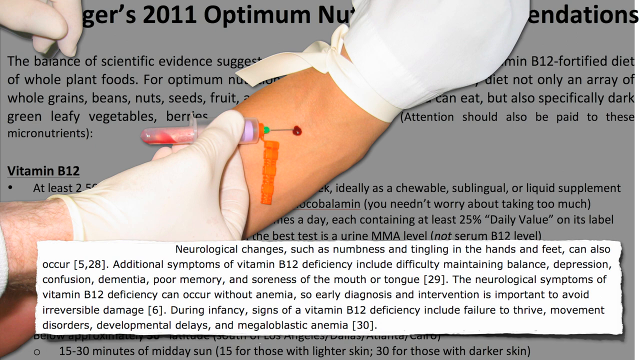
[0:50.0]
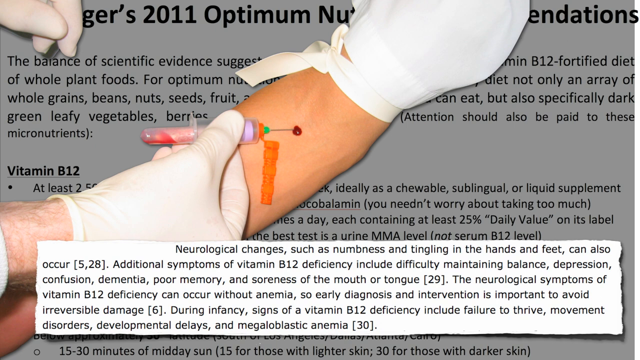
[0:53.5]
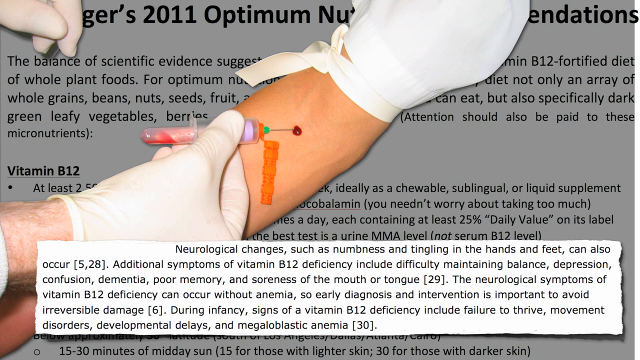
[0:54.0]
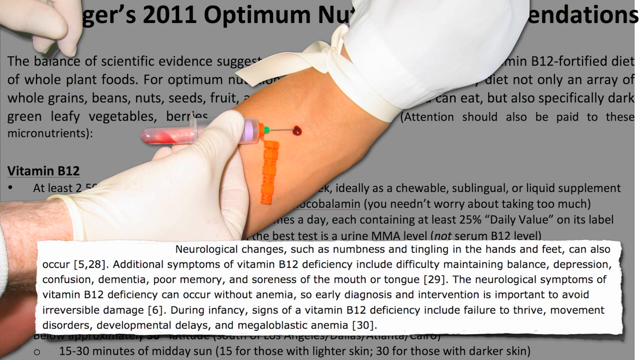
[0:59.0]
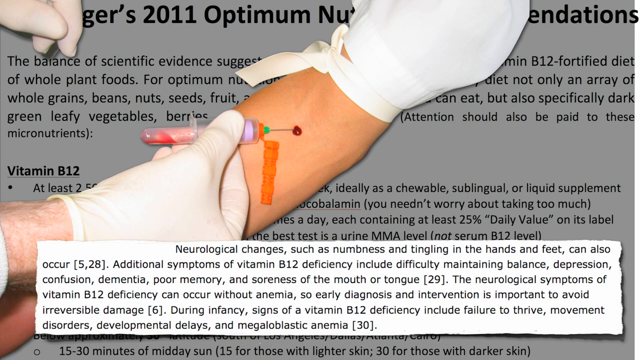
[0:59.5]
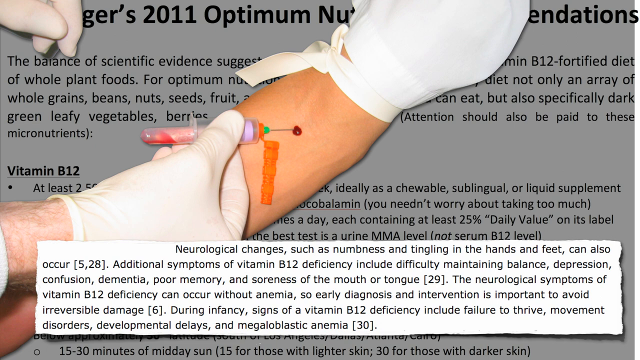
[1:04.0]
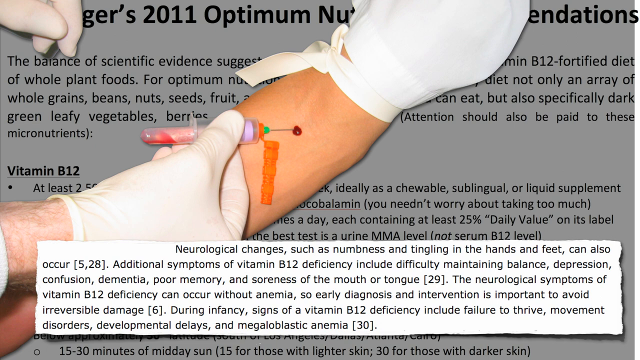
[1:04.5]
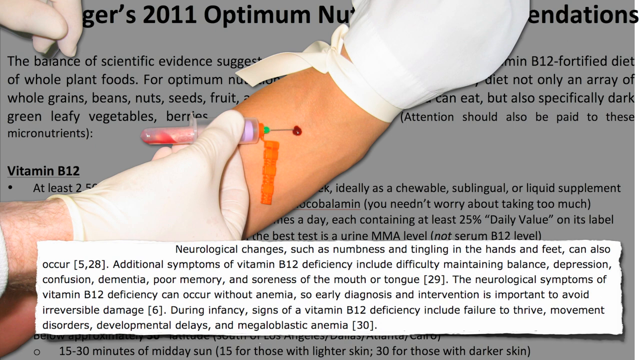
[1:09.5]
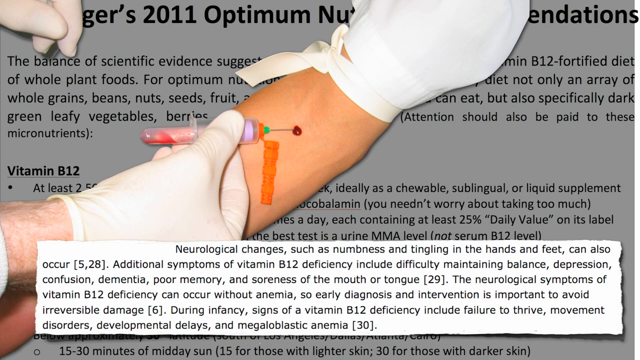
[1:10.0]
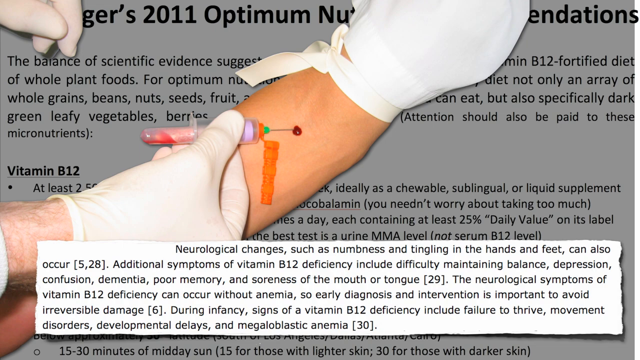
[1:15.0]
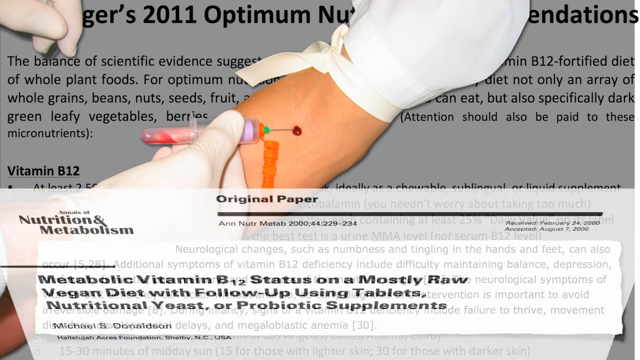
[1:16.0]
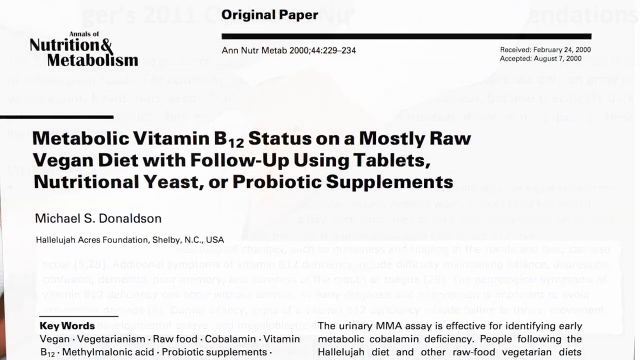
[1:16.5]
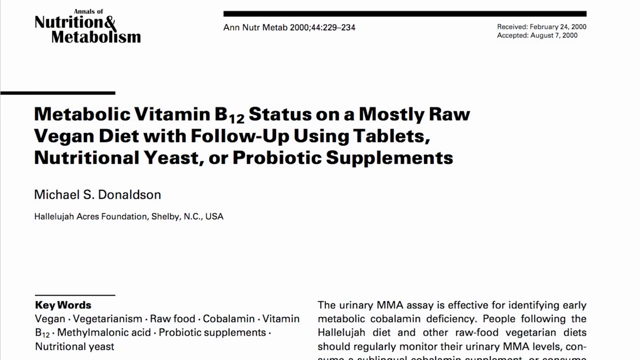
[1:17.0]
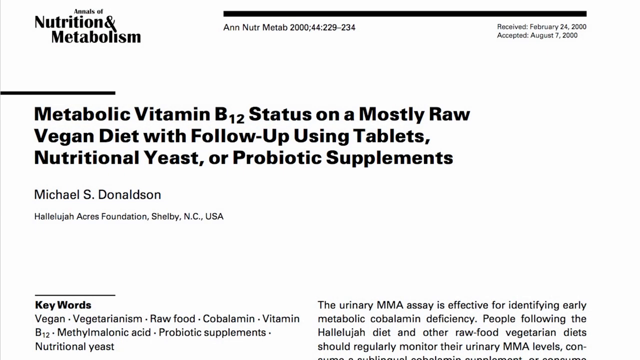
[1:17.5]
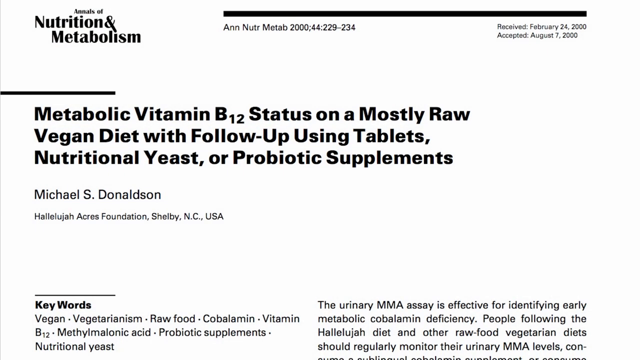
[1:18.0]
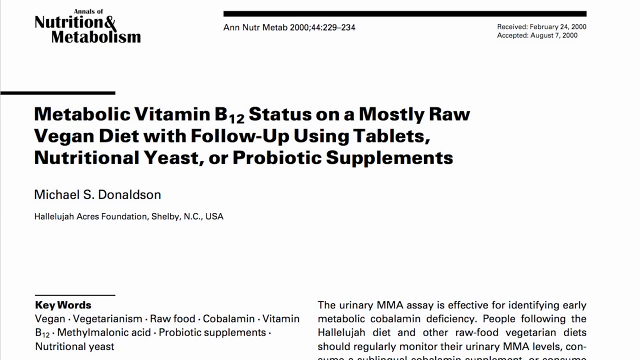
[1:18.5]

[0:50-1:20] The image of the arm having blood taken by the needle remains. There is a small pool of blood on the arm where the needle connects, and a gloved hand holds the base of the syringe with a thumb and index finger while the needle pokes through the skin. The background is a grayed-out image of some of the earlier text, and there is a text box at the bottom of the screen. This stays for several more seconds until a new slide flips onto the screen: a white background with a lot of black text and a black line border at the top. The title of the page is "Metabolic Vitamin B12 Status on a Mostly Raw Vegan Diet with Follow-Up Using Tablets, Nutritional Yeast or Probiotic Supplements" by Michael S. Donaldson. Keywords at the bottom of the page say "vegan, vegetarianism, raw food, cobalamin, vitamin B12, methylmalonic acid, probiotic supplements, nutritional yeast."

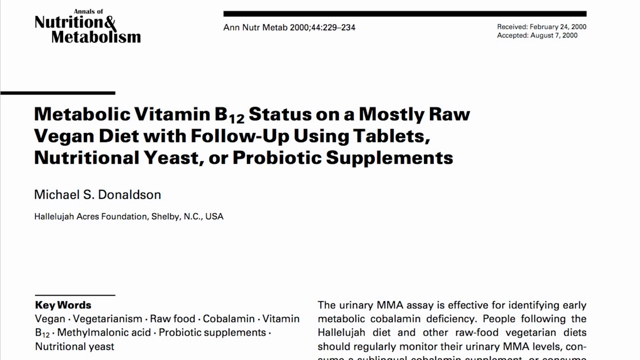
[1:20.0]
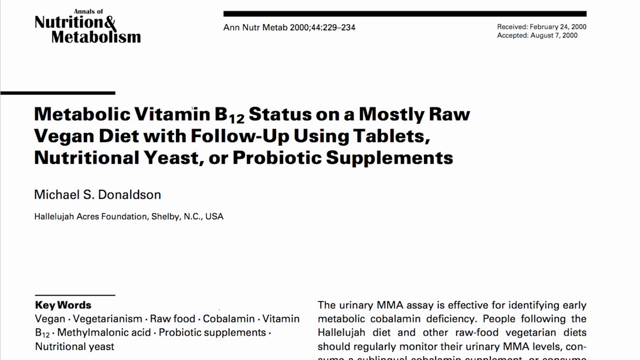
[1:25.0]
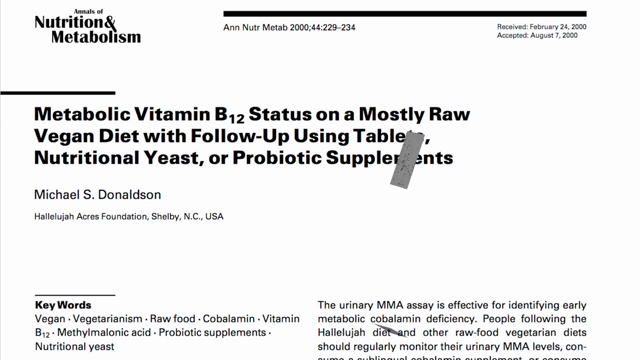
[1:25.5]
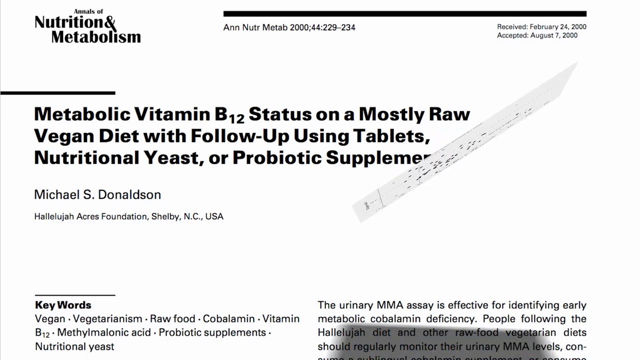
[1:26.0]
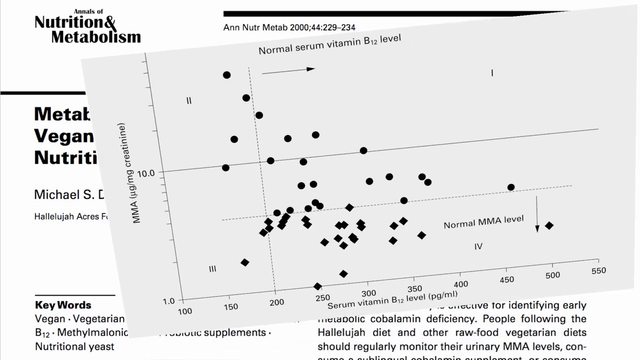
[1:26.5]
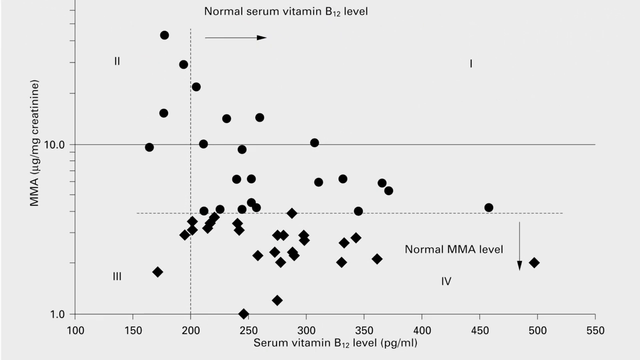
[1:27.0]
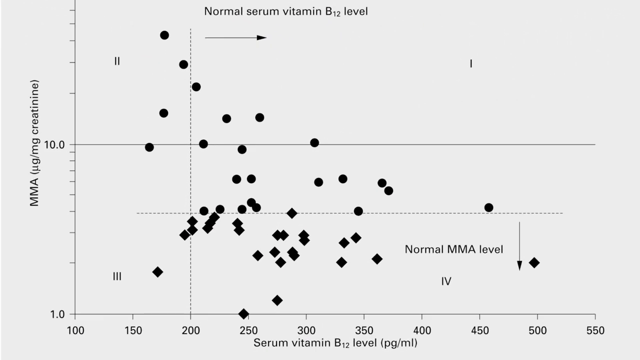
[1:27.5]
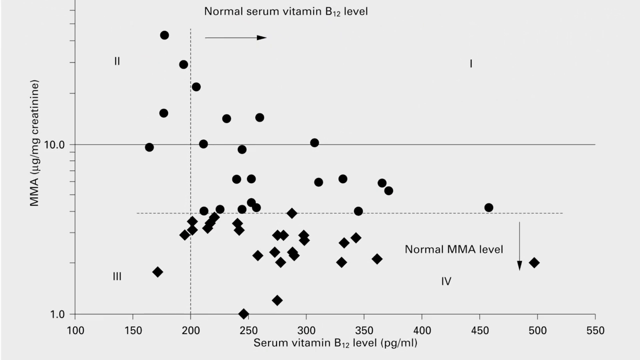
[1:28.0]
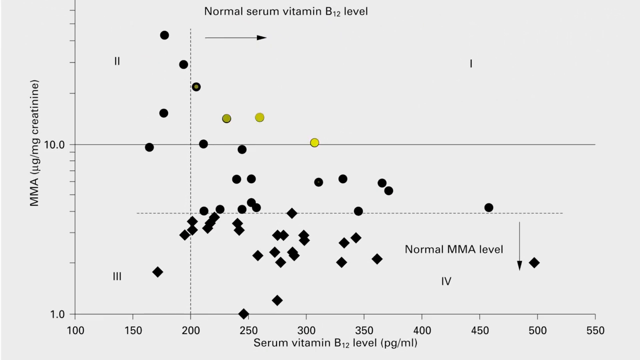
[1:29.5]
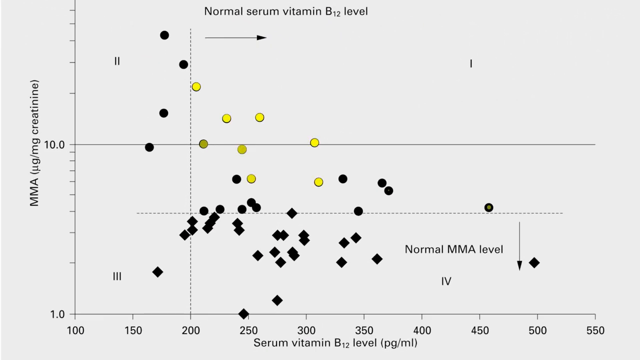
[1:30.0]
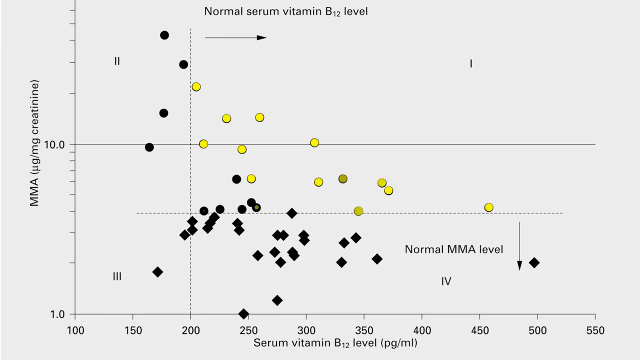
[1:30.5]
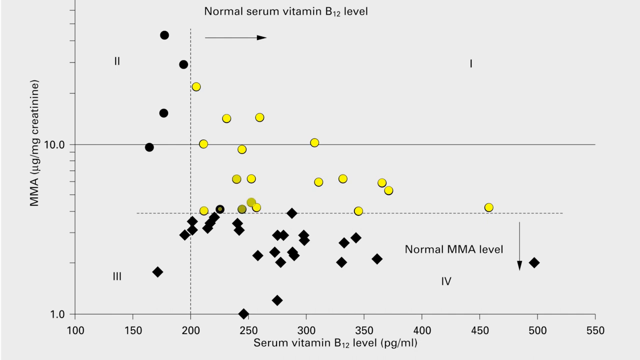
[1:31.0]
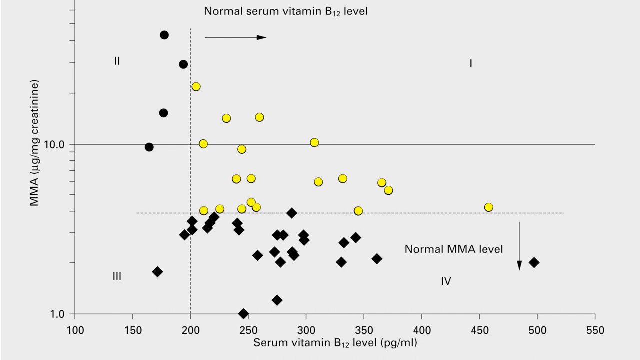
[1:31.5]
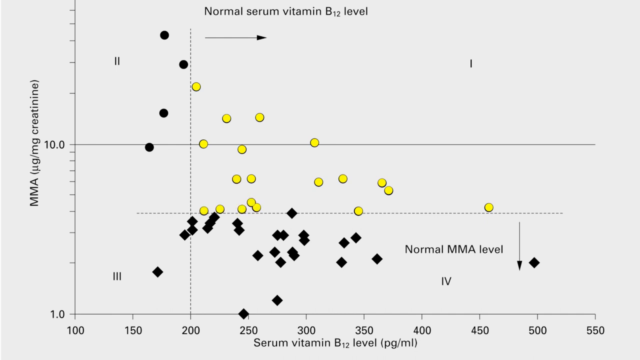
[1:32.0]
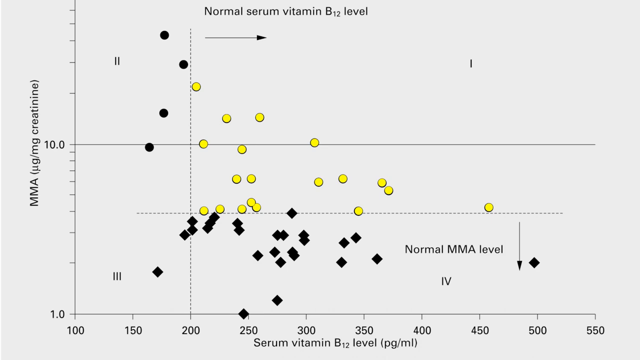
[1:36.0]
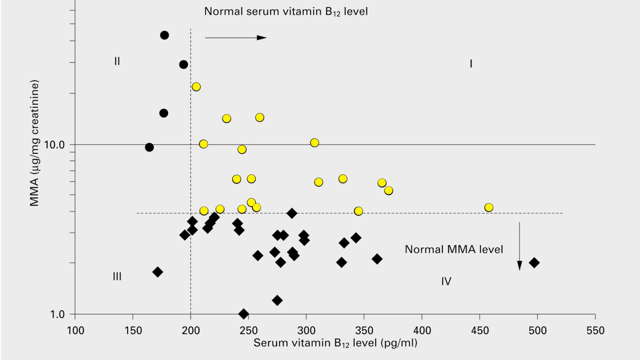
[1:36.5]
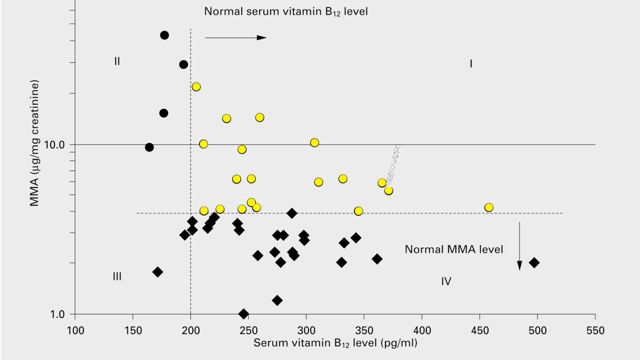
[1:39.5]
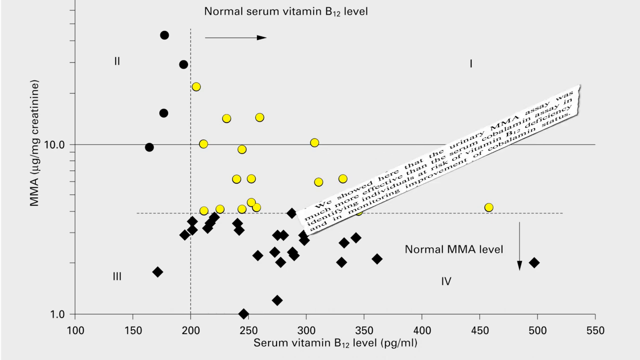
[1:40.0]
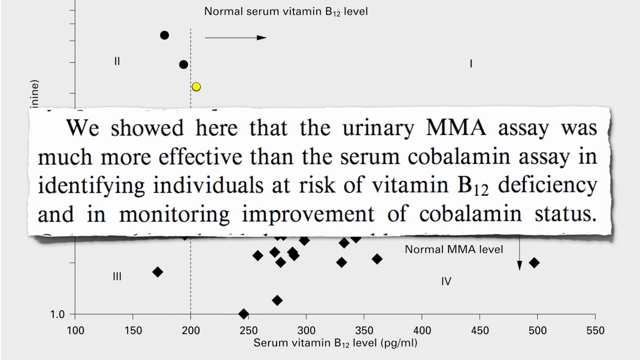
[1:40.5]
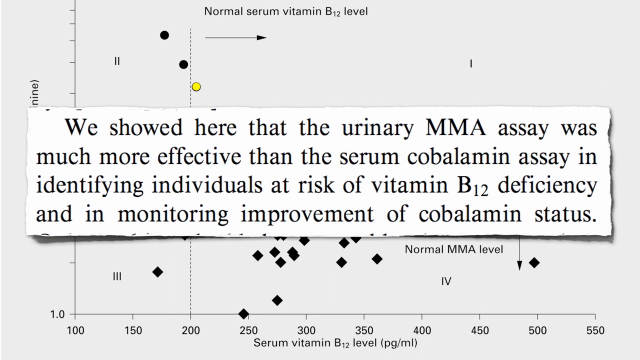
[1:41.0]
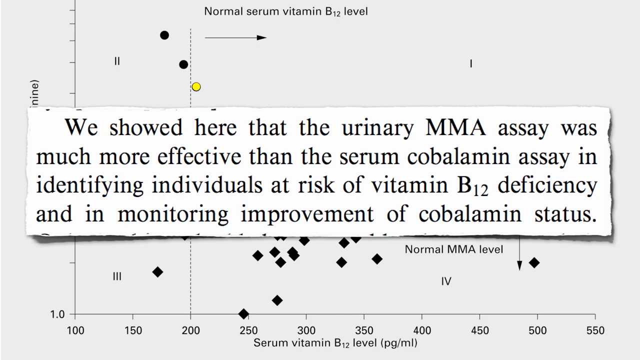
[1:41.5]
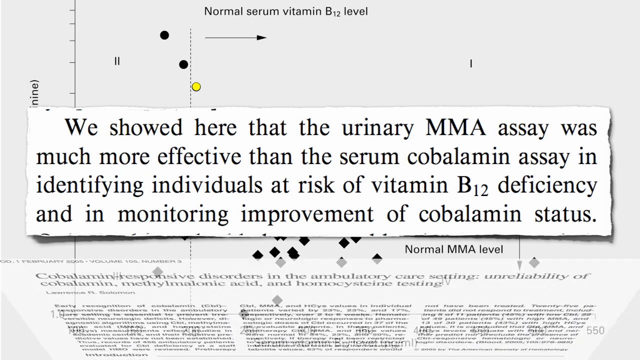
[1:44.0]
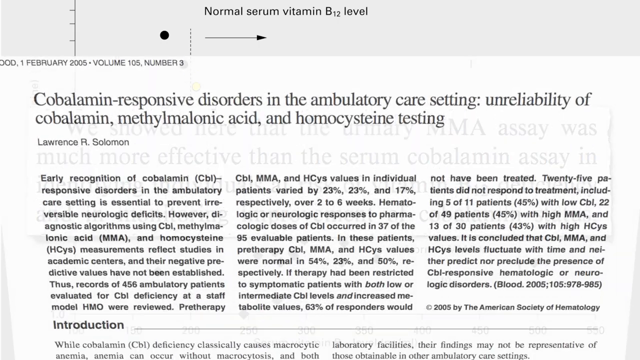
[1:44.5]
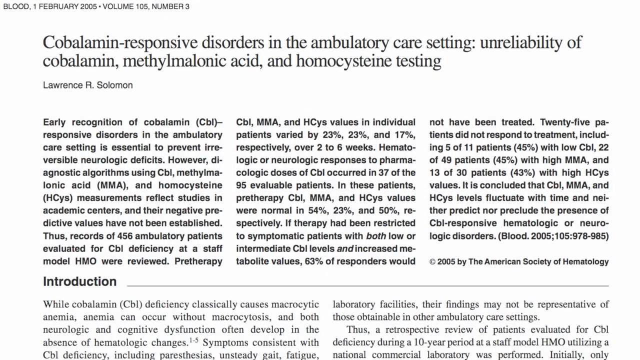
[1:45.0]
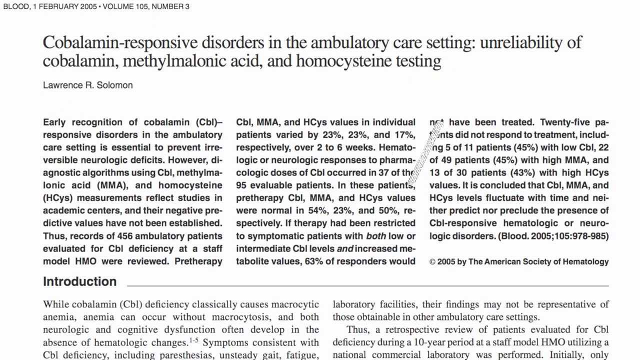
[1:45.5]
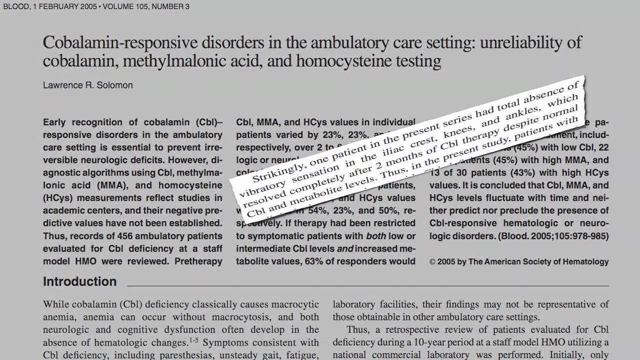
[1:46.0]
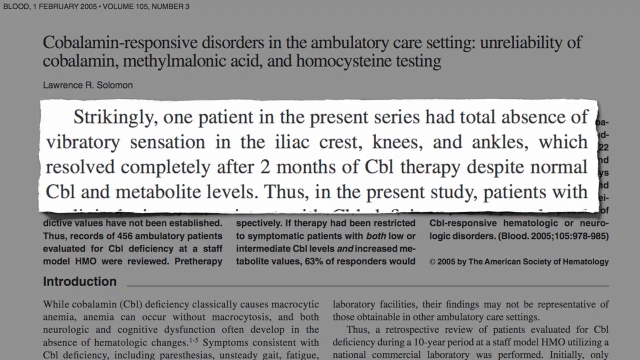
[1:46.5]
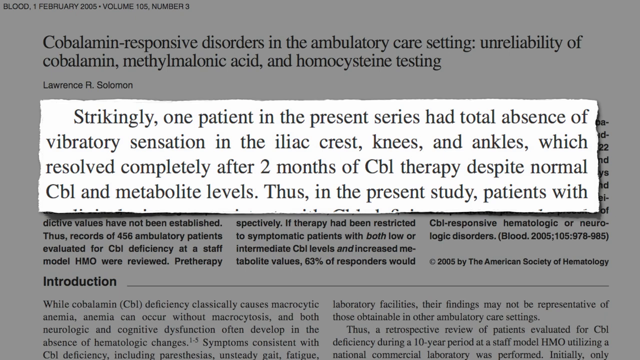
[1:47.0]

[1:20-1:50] The page stays for several more seconds before a graph with a white background flips onto the screen. On the left, the y-axis says "MMA" and "milligrams of protein," and the x-axis at the bottom says "serum vitamin B12 level." There are several points on the graph, some diamond-shaped and some circle-shaped, and some dotted lines: one dotted line goes up from 200 on the x-axis and another goes over from five on the y-axis. An arrow pointing down near 500 on the x-axis says "normal MMA level," at about four hundred and seventy-five. Some of the circles on the graph that were black are then filled with yellow; everything within the dotted lines is filled with yellow, so all of the dots above or after the dotted lines are yellow. Text then flips onto the screen in a box that overlays most of the screen and says "we showed here that the urinary MMA assay was much more effective than the serum cobalamin assay in identifying individuals at risk of vitamin B12 deficiency and in monitoring improvements of cobalamin status." Another page flips up to reveal a lot of text, titled "cobalamin responsive disorders in the ambulatory care setting, unreliability of cobalamin methylmalonic acid in homocysteine testing." A small rectangular text box then overlays that image and dims it, saying "strikingly, one patient in the present series had a total absence of vibratory sensations in the iliac crest, knees, and ankles, which resolved completely after two months of CBL therapy despite normal CBLN metabolite levels. Thus, in the present study, patients with"